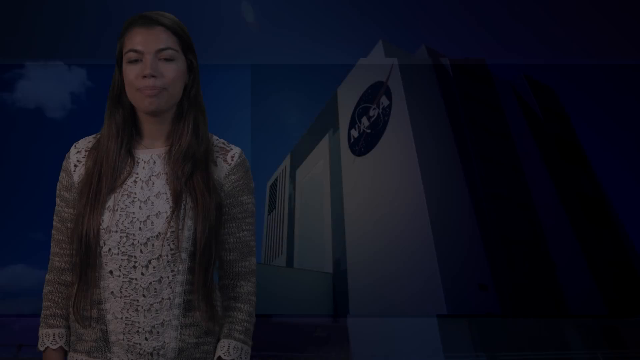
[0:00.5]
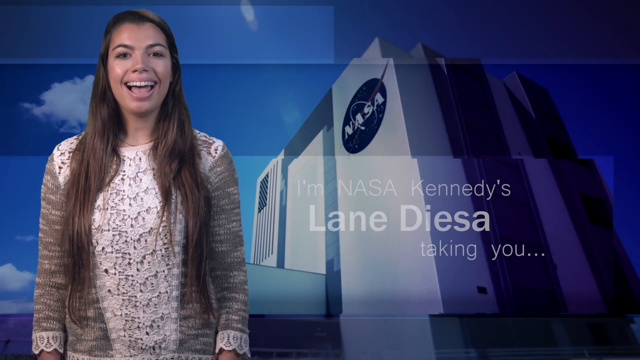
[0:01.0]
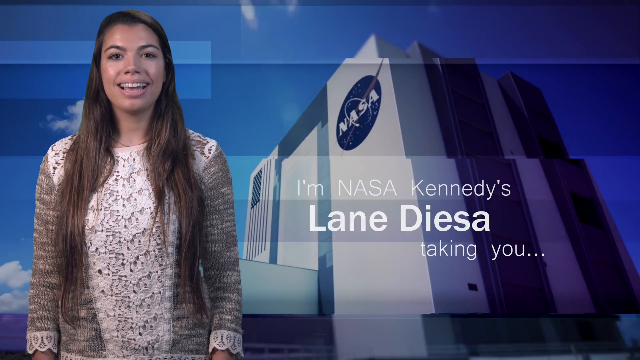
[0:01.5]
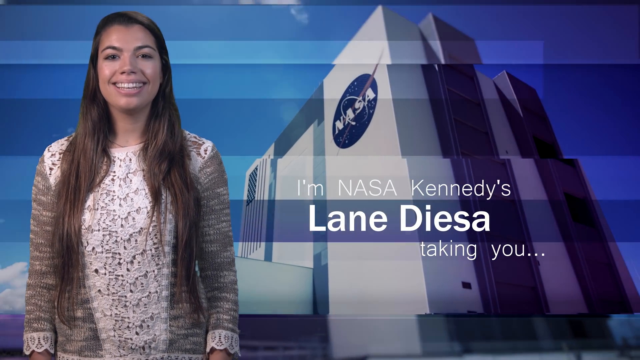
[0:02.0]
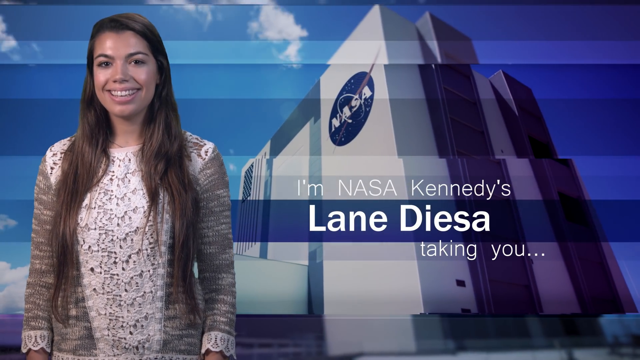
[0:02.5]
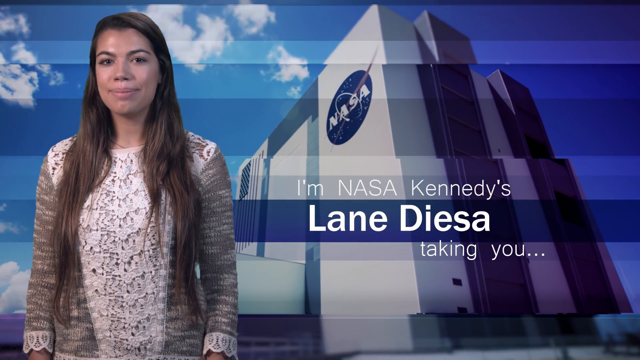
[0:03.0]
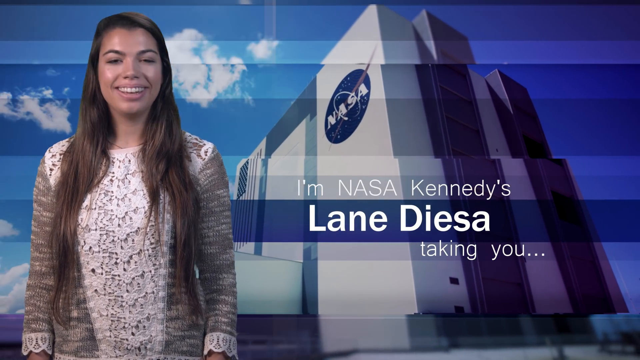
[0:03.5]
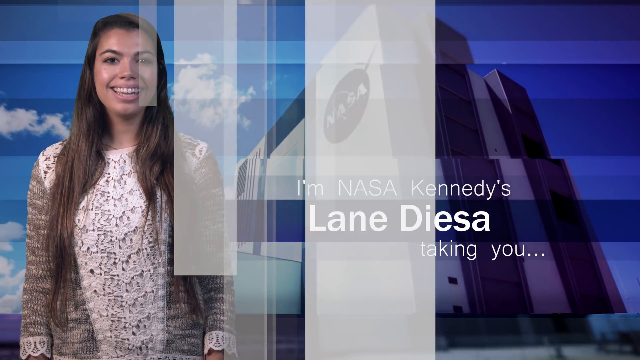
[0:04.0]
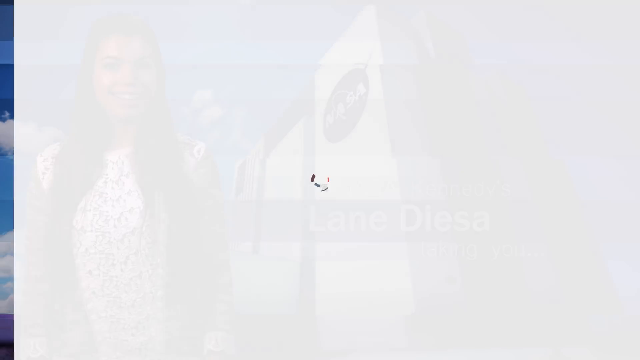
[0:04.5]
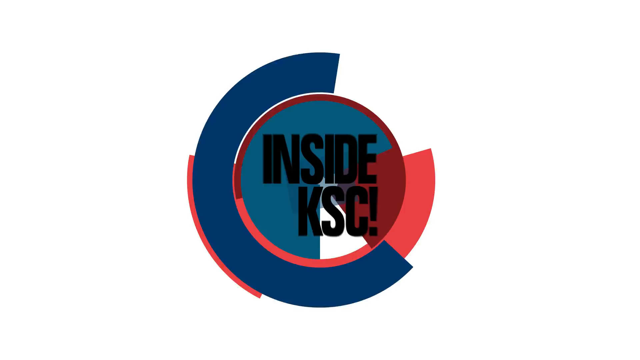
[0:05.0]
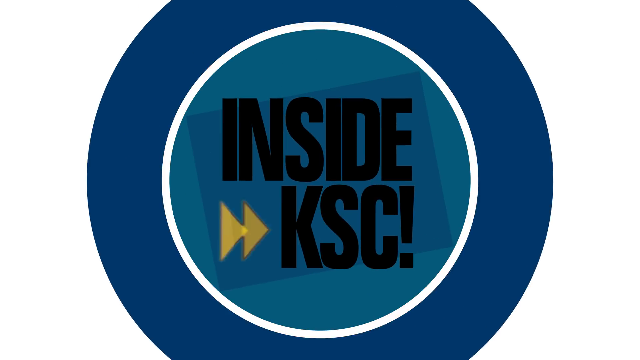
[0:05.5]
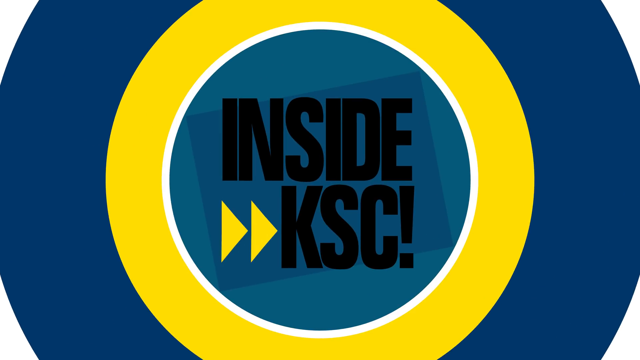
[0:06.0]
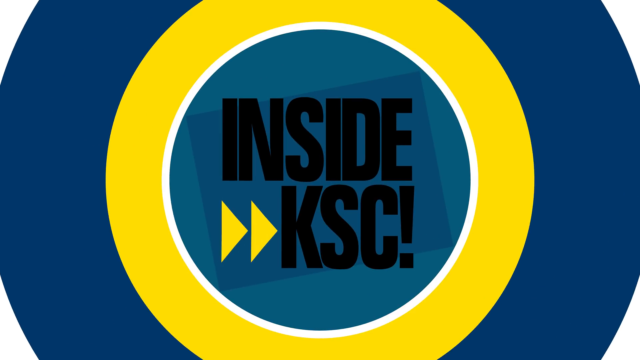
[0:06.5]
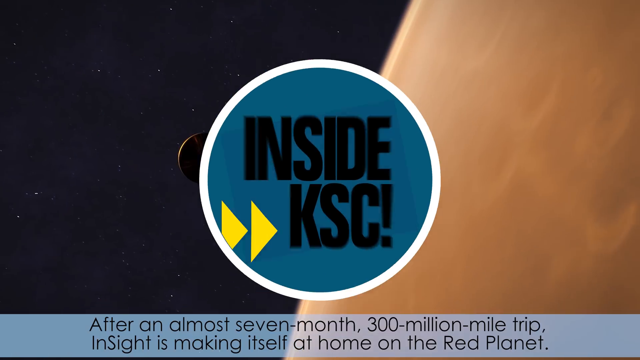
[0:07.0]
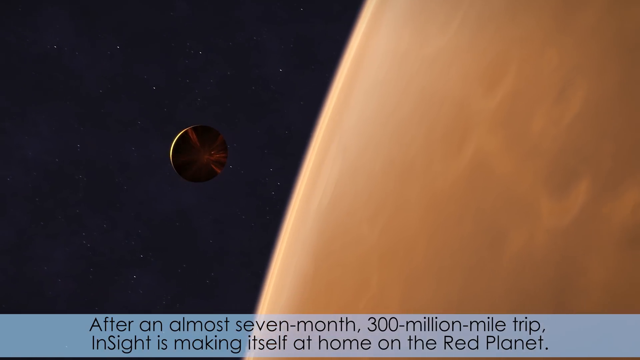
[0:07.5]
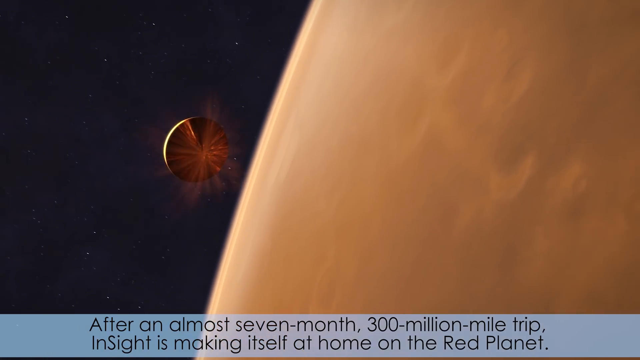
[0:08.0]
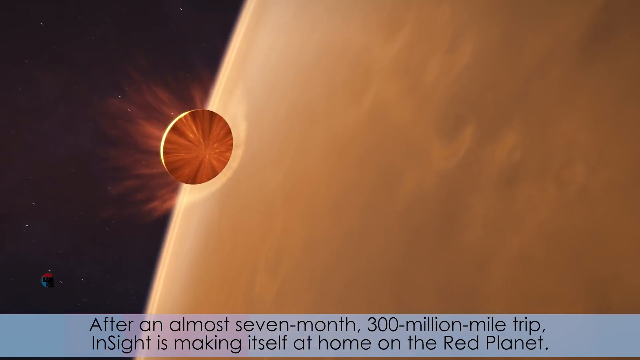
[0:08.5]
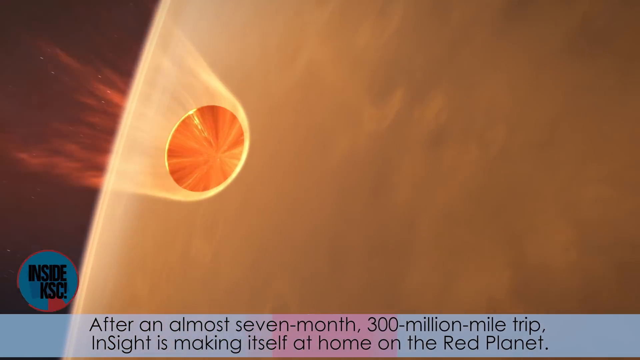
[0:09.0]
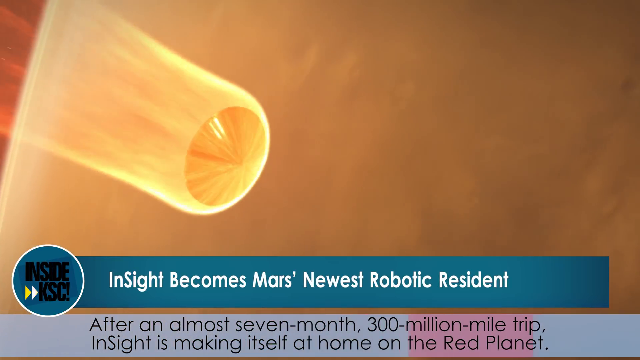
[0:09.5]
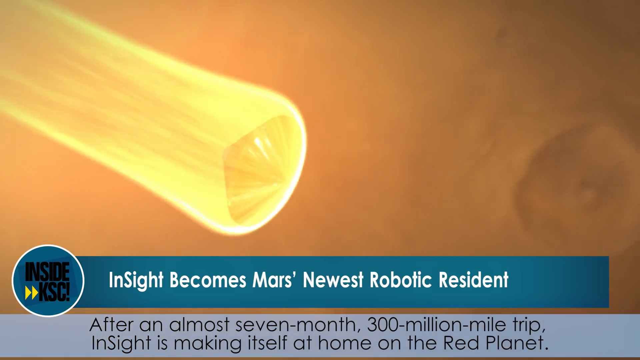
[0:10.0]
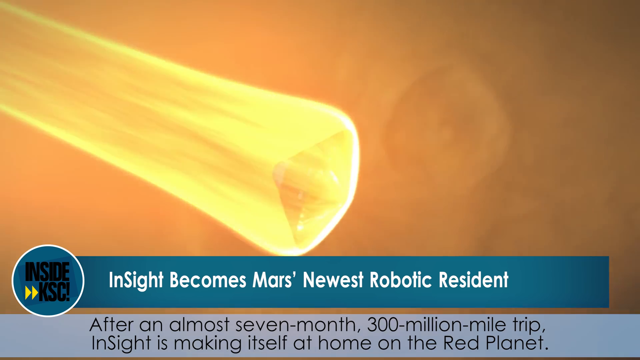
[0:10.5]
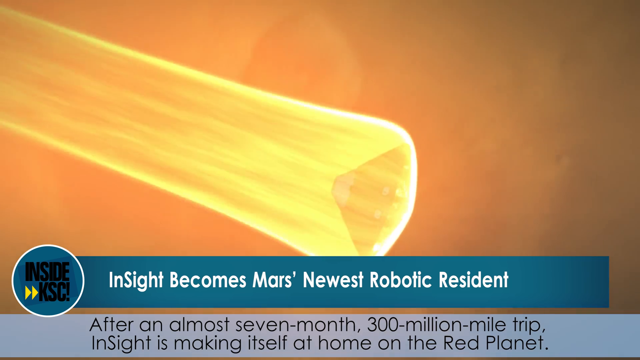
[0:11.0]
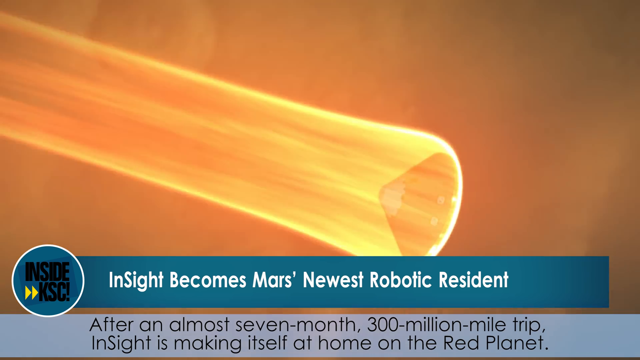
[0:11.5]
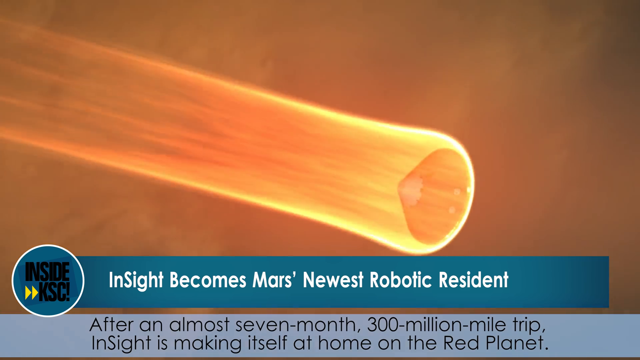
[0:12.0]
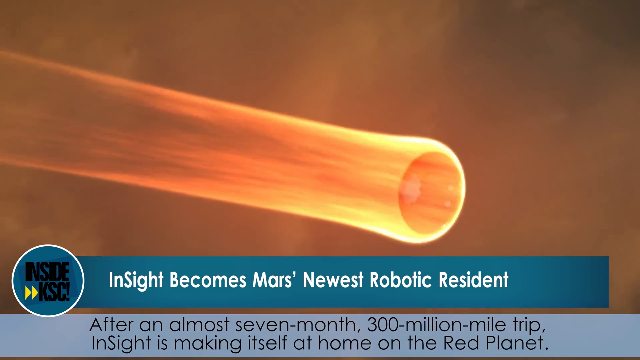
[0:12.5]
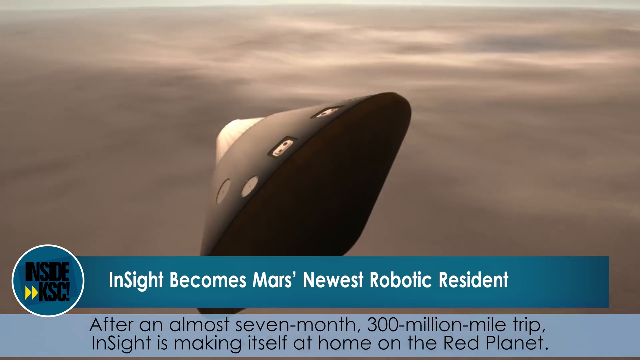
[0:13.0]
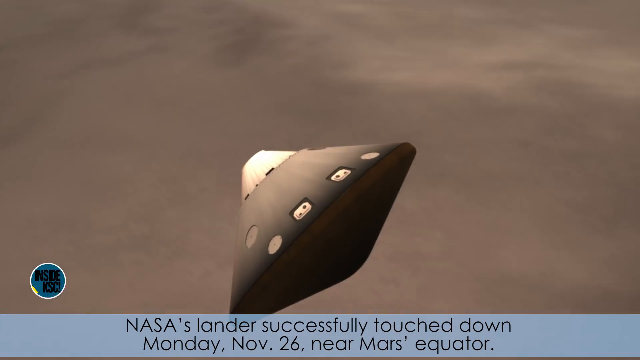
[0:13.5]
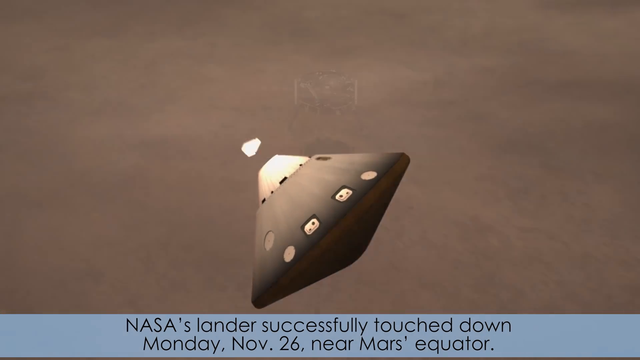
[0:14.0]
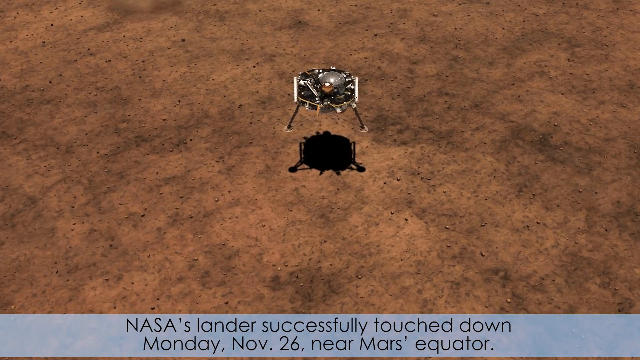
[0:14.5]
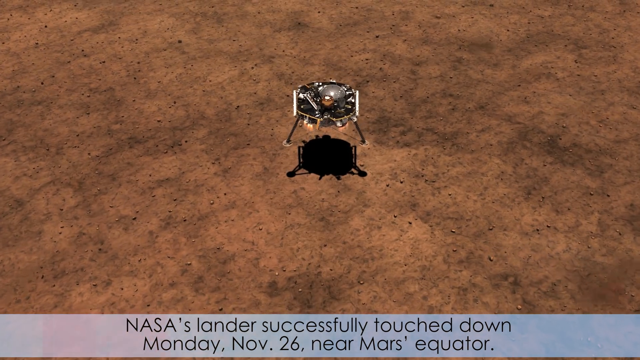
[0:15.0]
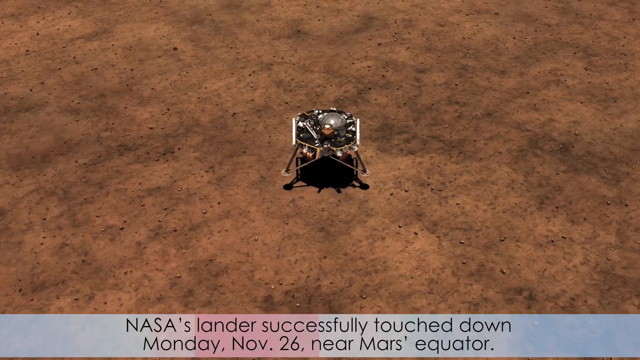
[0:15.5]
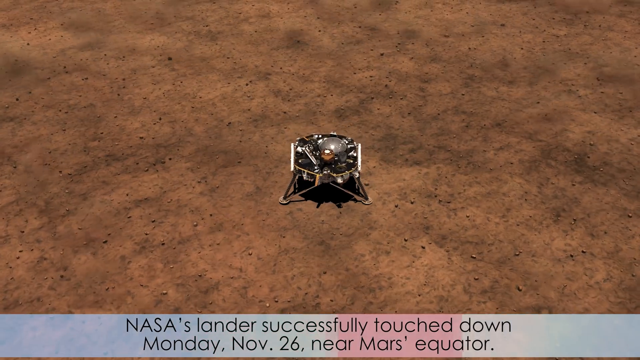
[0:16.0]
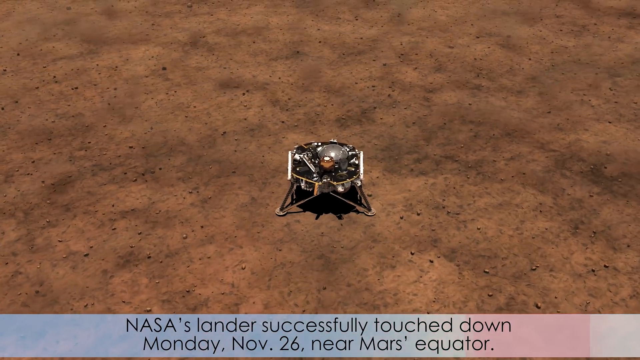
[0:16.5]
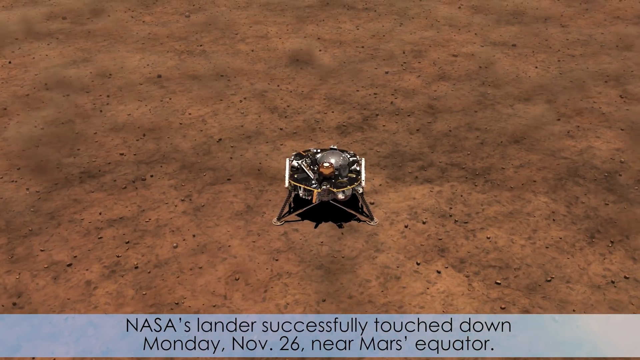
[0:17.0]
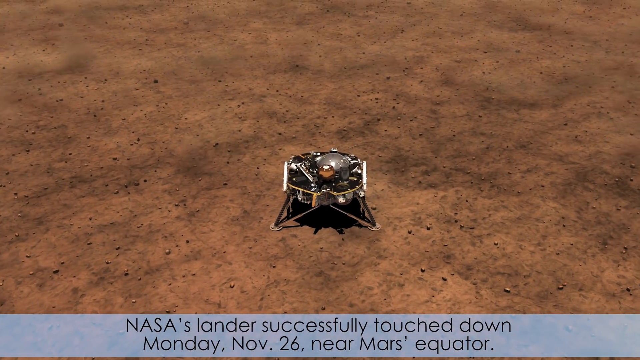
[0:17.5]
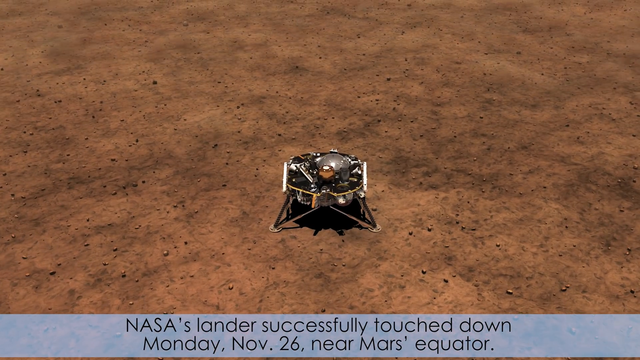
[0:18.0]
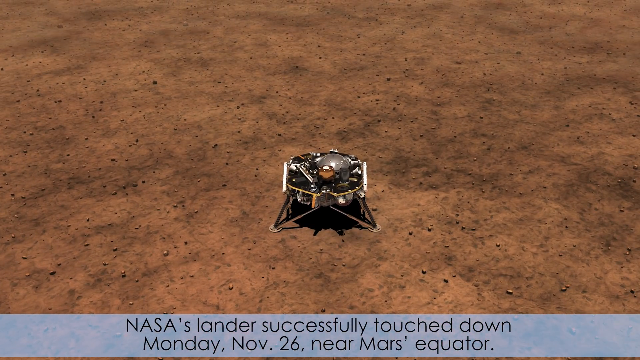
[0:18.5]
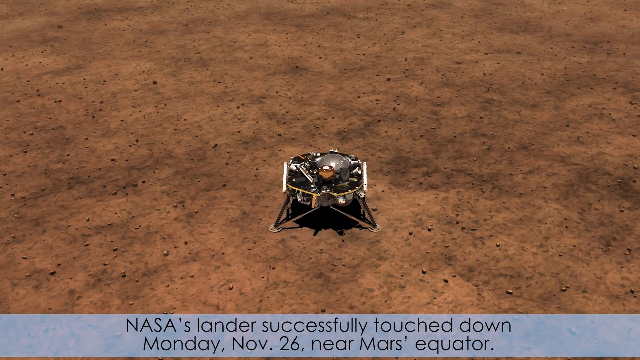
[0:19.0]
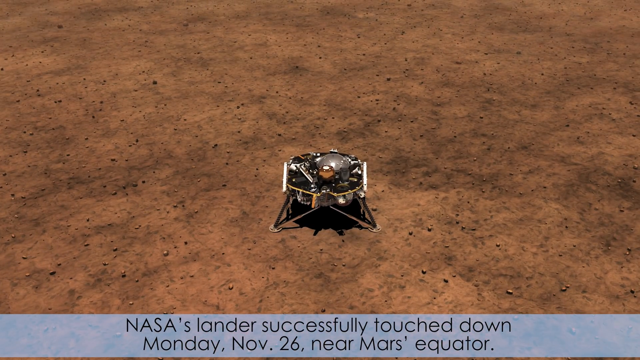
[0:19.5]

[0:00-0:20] A white woman with long brown hair, wearing a white crocheted long-sleeved sweater, is on the left side. Behind her is a blue sky with a bit of white cloud to the left, and the white NASA building is to her right, with the NASA logo on its side and an American flag with red and white stripes. White lettering on the right side reads "I am NASA Kennedy's". The screen then goes white as she fades away. On a white background appears a blue circle with yellow lines and white lines in the middle, black font in the center, a gray background, and two white and yellow arrows pointing to the right; it says "Inside KSC". Next there is a black, white-dotted background on the left and orange on the right, with a blackish sphere with a hint of red in its center on the left side. Below, an off-white box with black font reads "after an almost seven-month, 300-million-mile trip, InSight is making itself at home on the red planet." The sphere appears to be coming into orbit, building up a flame around it and turning bright yellow. A blue box underneath, in white lettering, says "Insight becomes Mars' newest robotic resident." On the left side is a white circle on a blue background with black font saying "Inside KSC", with two yellow arrows pointing towards the K. As the rounded sphere burns up and lands on Mars, a grayish bar at the bottom reads in black font "NASA's lander successfully touched down Monday, November 26 near Mars' equator." A gray, rounded sphere, white at the top with some white squares at its base, is shown, followed by a two-legged module landing on a reddish-gray, soiled planet.